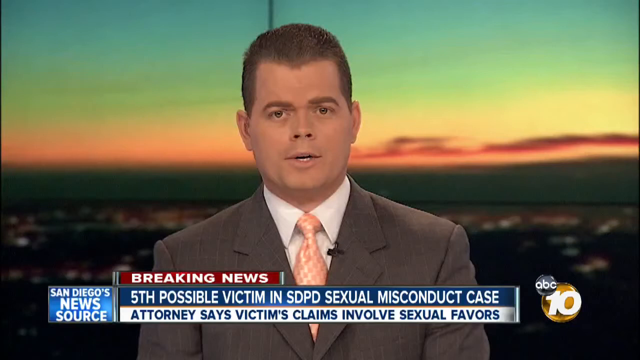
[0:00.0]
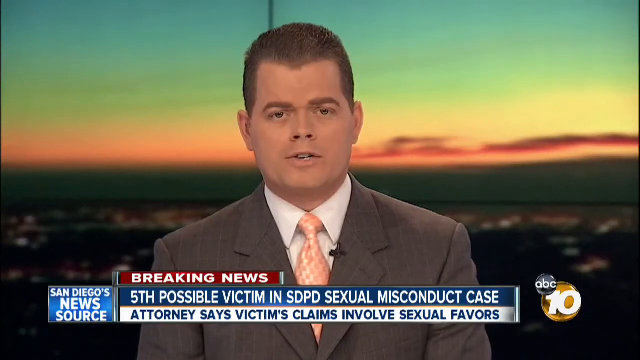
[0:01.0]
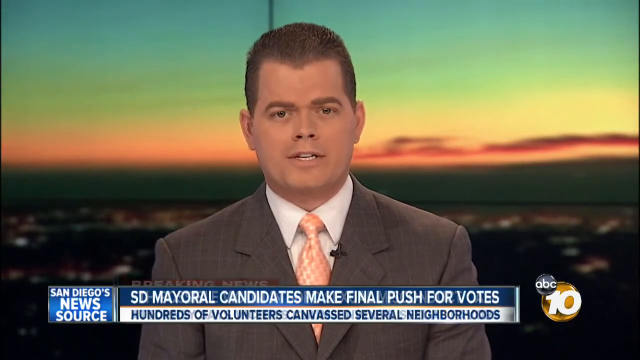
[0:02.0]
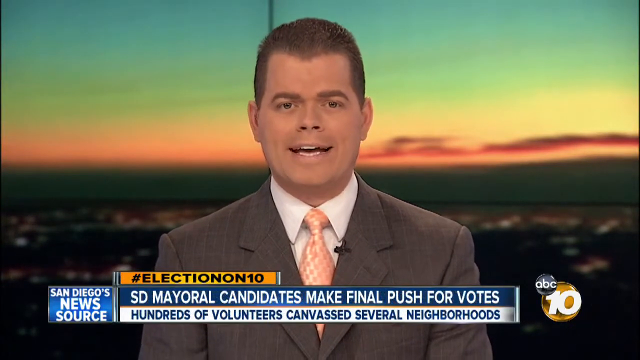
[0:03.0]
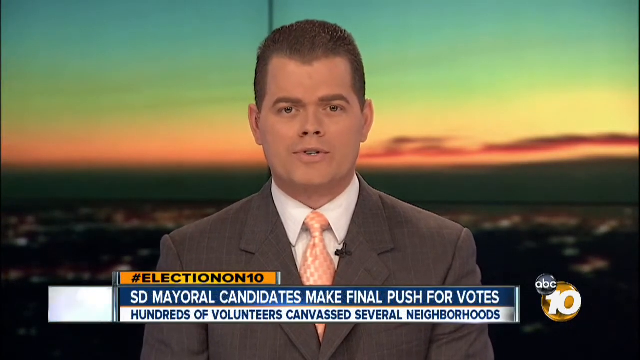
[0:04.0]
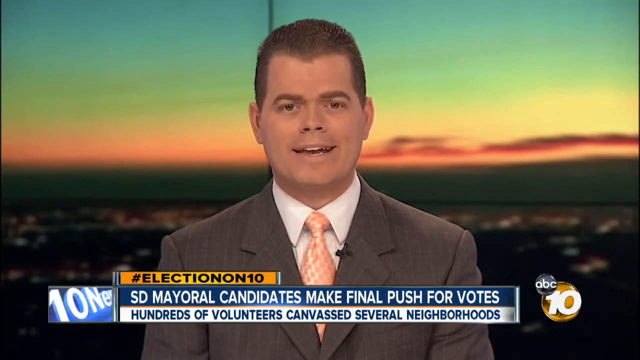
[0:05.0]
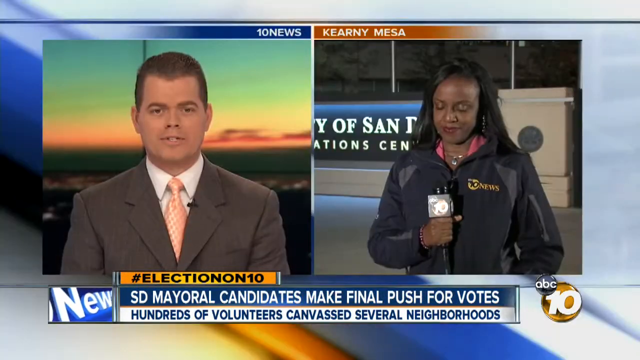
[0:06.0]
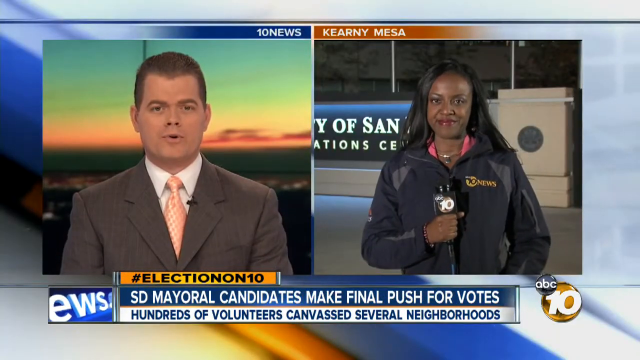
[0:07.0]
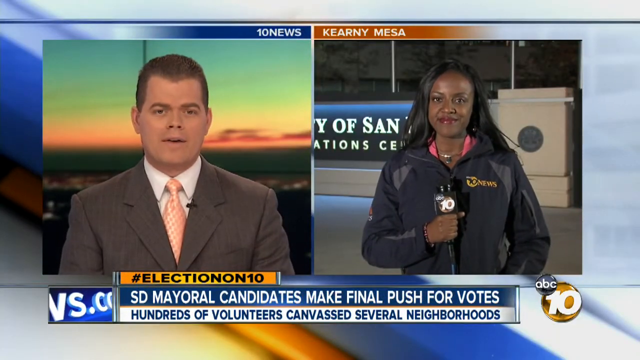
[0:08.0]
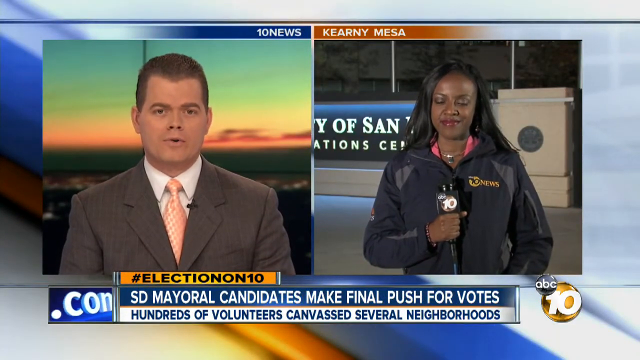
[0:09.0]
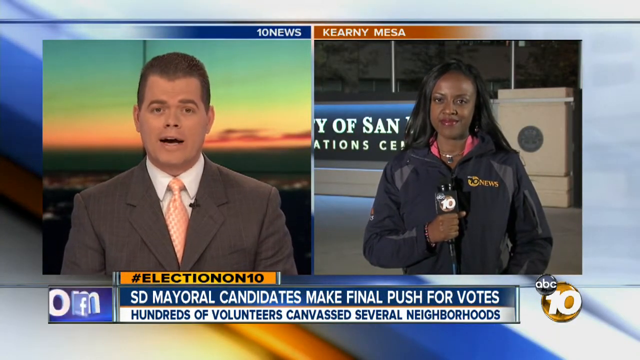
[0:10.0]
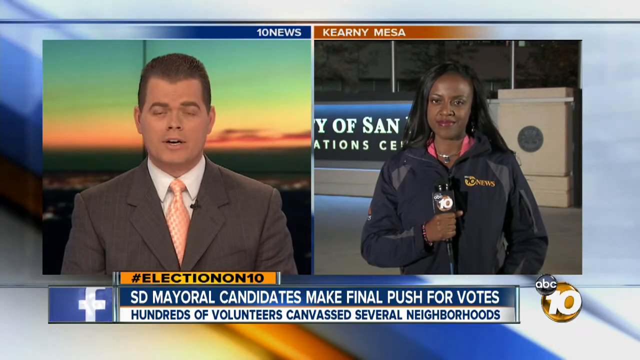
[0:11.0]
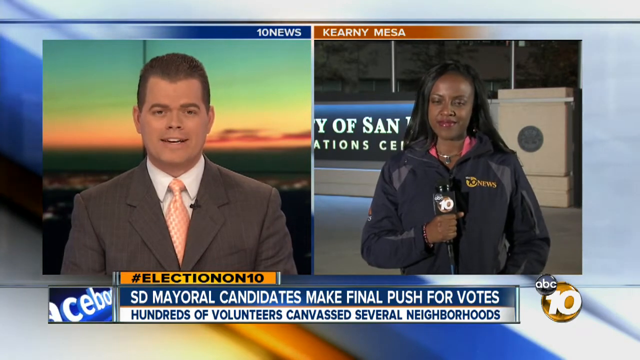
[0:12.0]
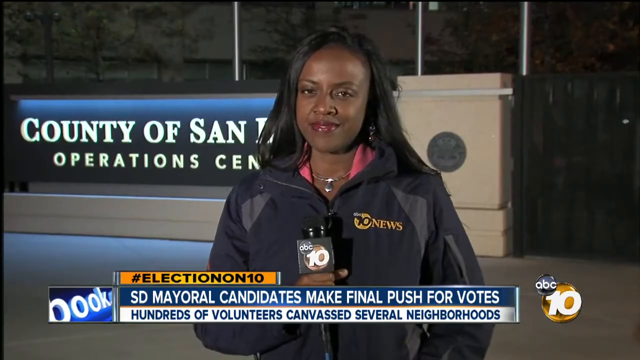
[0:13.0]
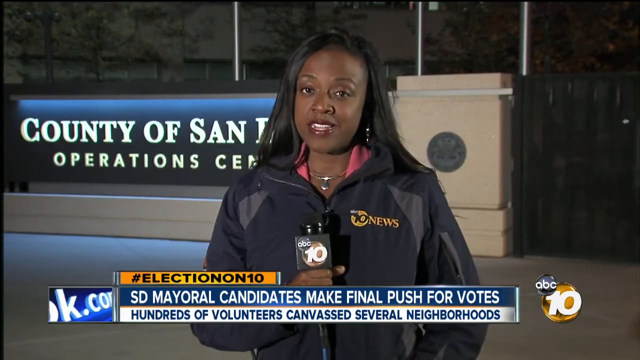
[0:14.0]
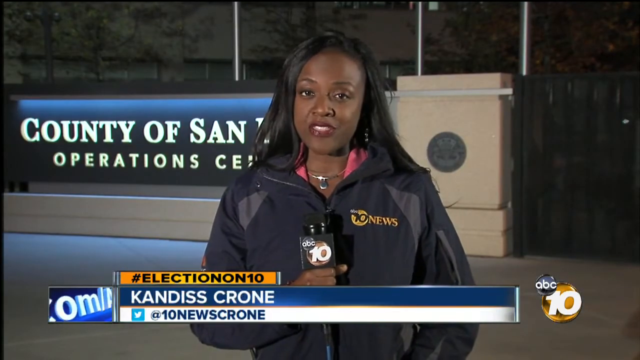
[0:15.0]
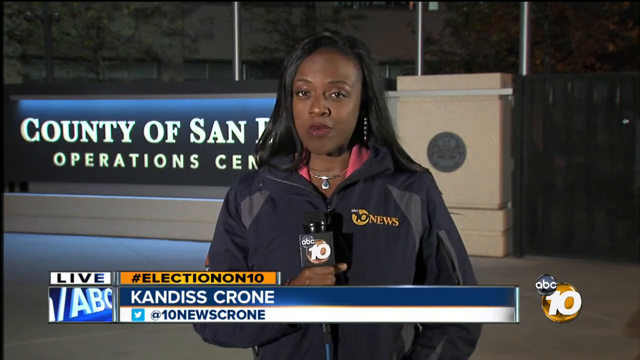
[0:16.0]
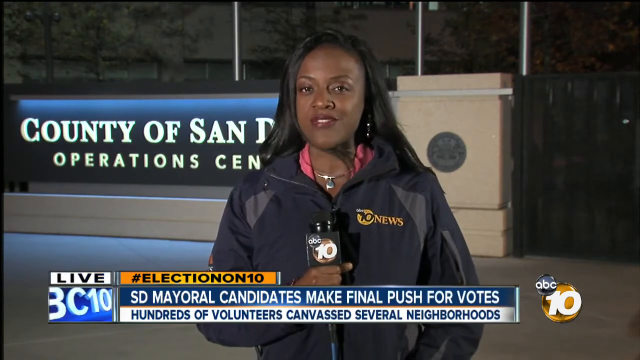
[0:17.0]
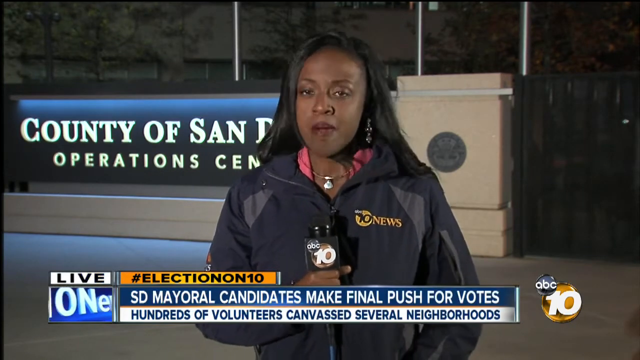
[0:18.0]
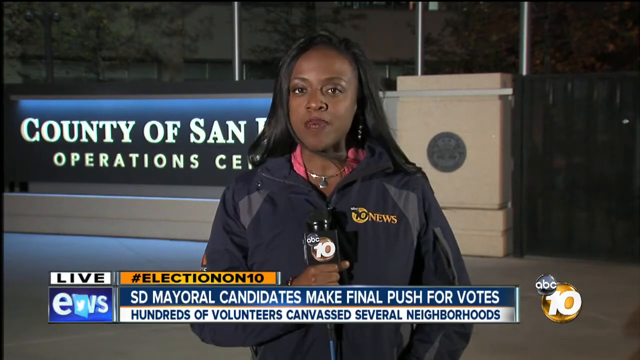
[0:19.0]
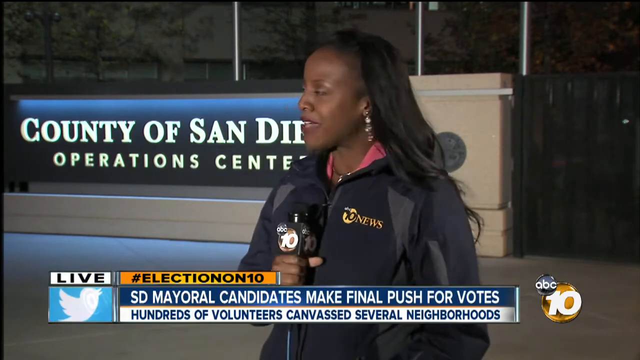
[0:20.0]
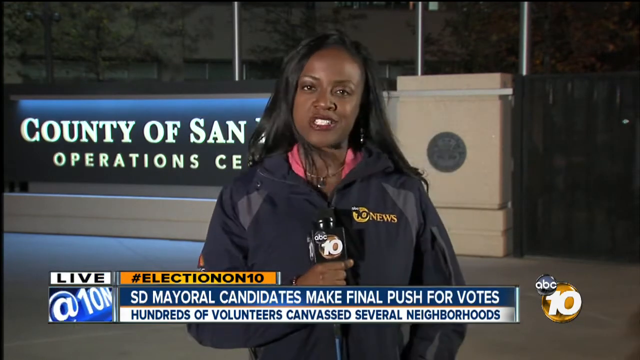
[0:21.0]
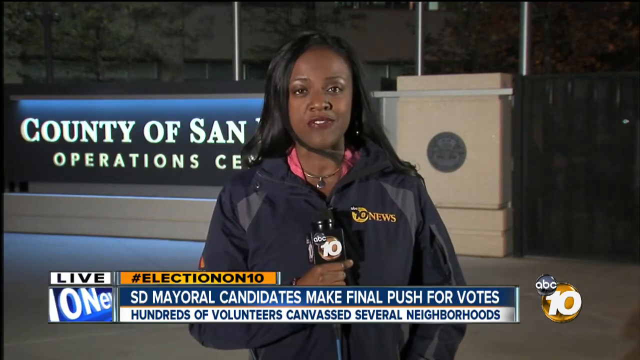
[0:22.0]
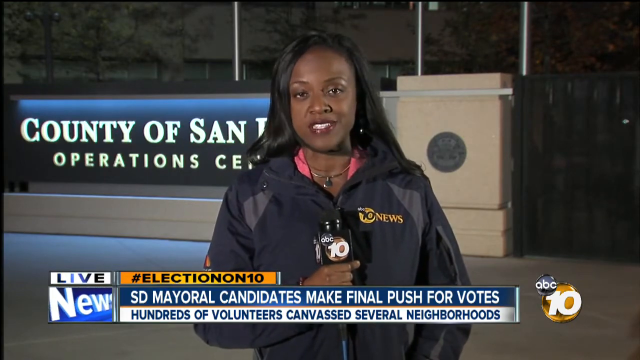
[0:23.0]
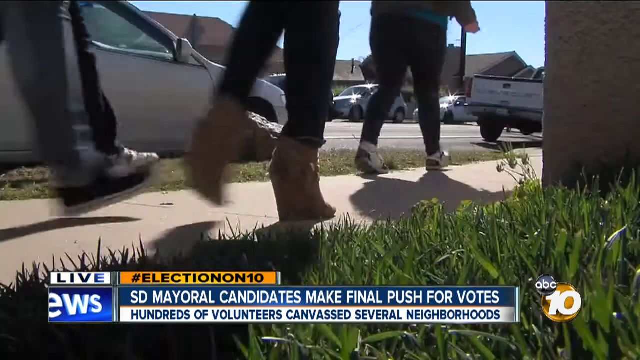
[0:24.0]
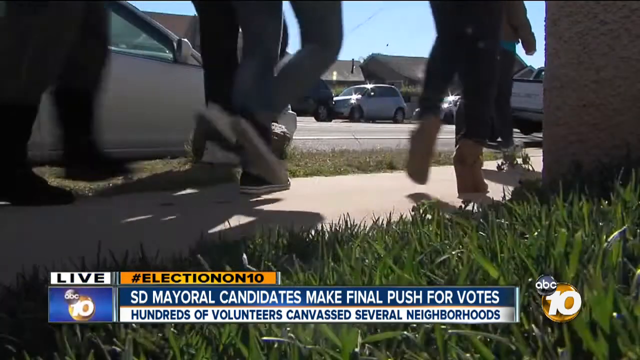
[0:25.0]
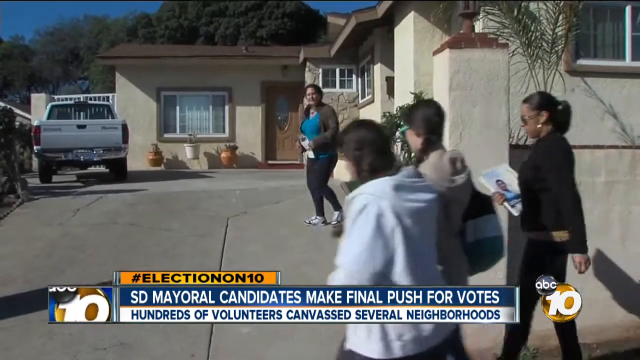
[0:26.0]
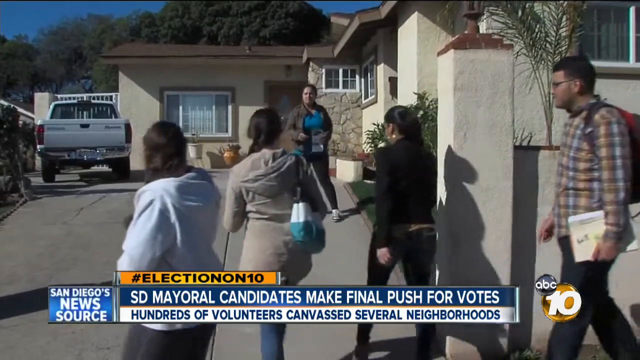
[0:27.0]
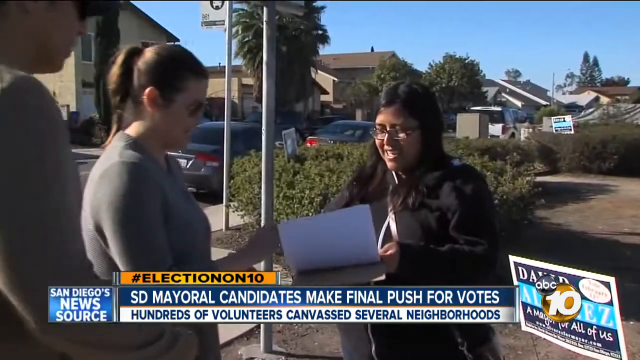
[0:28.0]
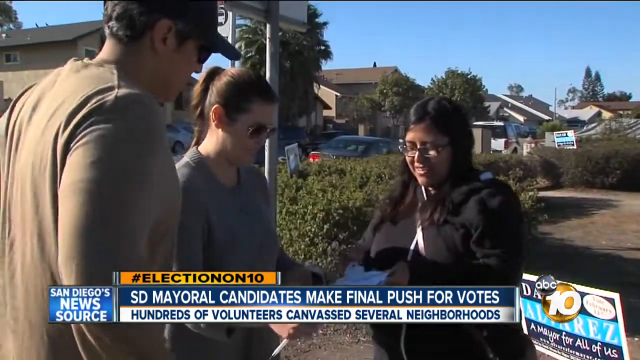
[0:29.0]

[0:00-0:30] A gentleman is in the center of the screen, wearing a gray blazer, a white shirt and a tie of a shiny white and pink material. He has dark hair and looks toward the screen. Behind him is a blurred image of a skyline. A caption below him reads "Breaking News", then changes to "Election 10". The screen then splits: the man remains on the left, and a woman appears on the right. She is outside in a coat, holding a microphone in her right hand. Behind her is a sign on which only the letters "OB-SAN" are visible at first because the shot is zoomed in; as the view widens, the words "County of San operations" become visible.